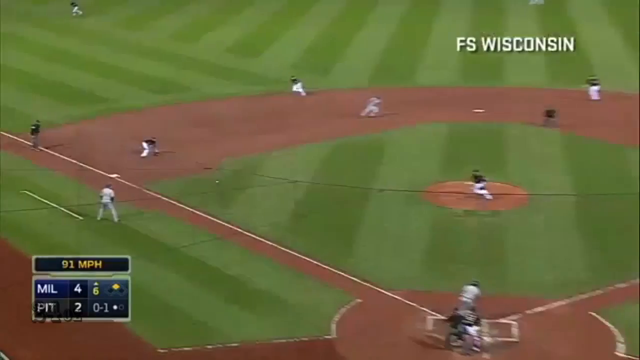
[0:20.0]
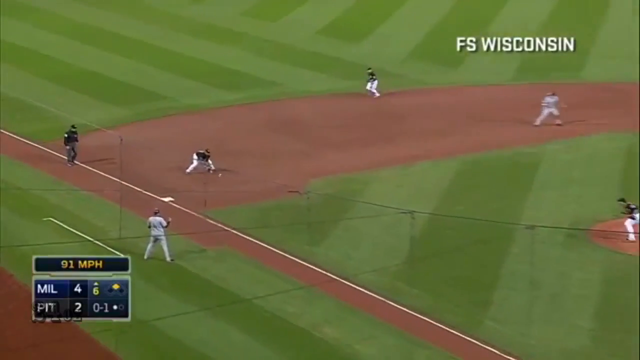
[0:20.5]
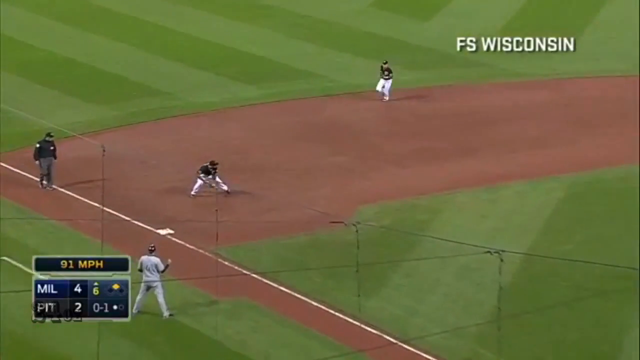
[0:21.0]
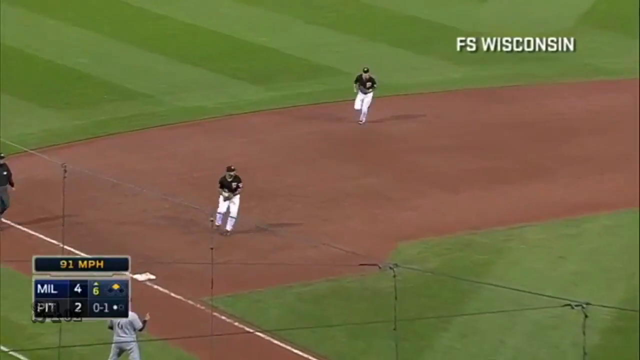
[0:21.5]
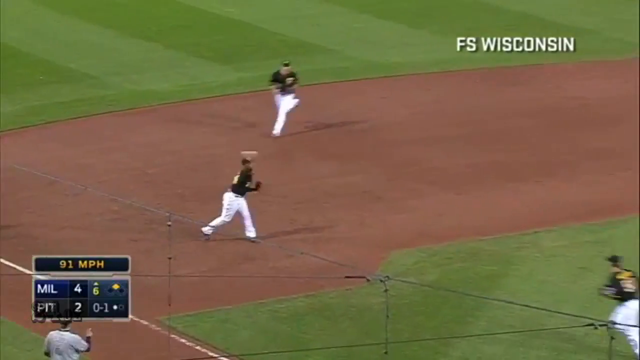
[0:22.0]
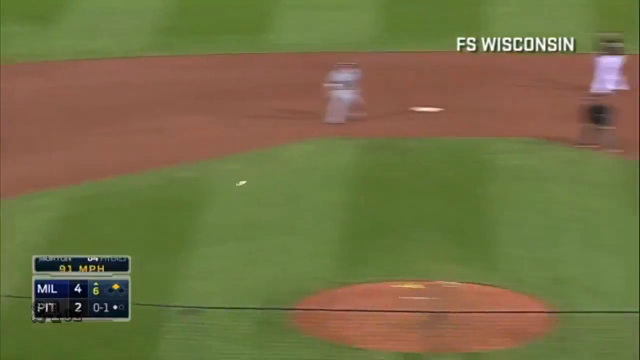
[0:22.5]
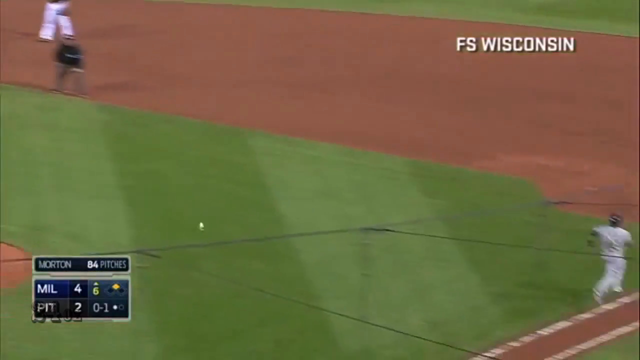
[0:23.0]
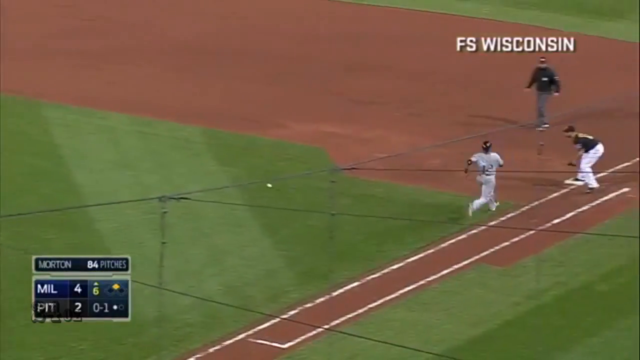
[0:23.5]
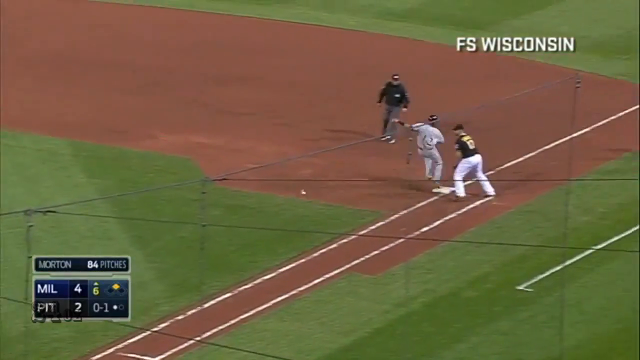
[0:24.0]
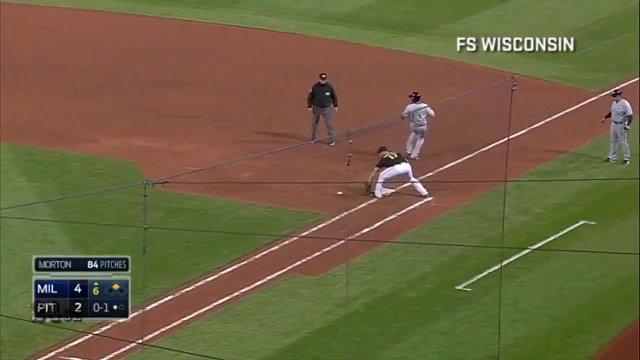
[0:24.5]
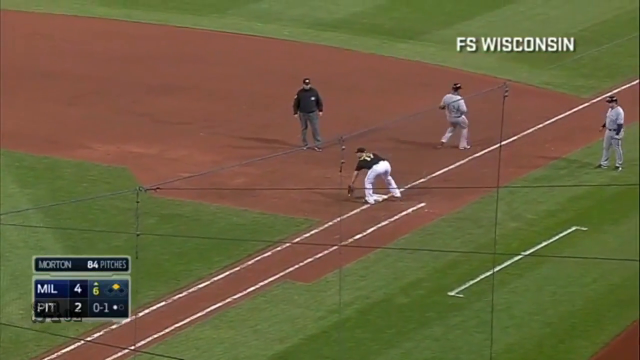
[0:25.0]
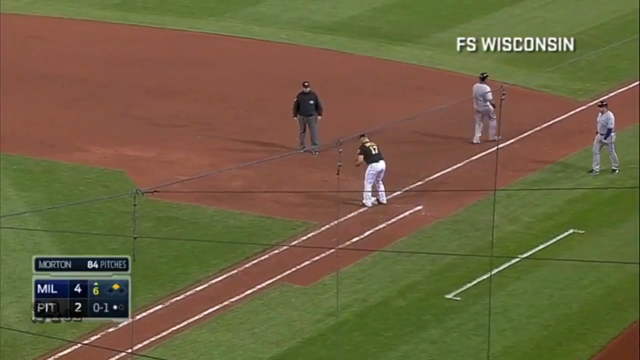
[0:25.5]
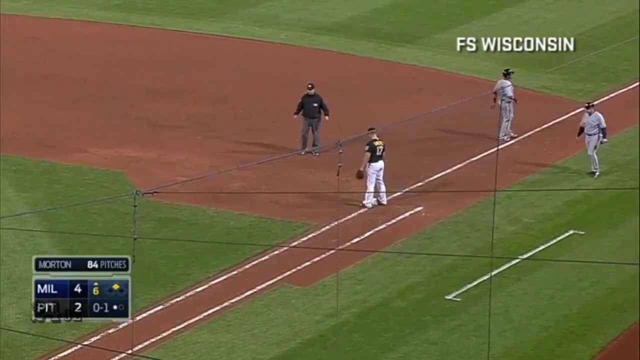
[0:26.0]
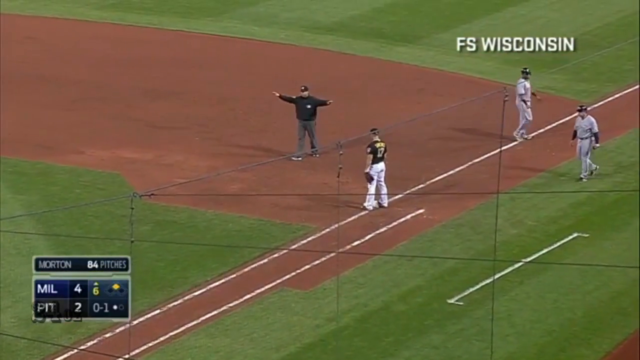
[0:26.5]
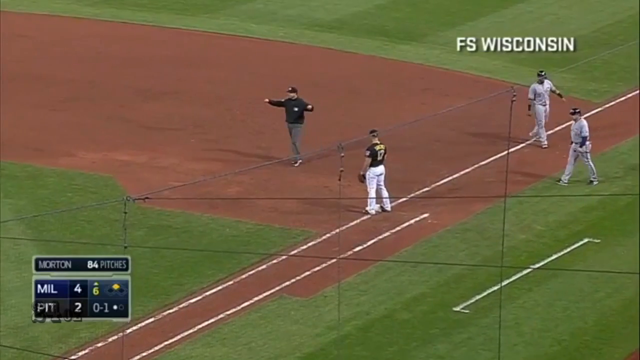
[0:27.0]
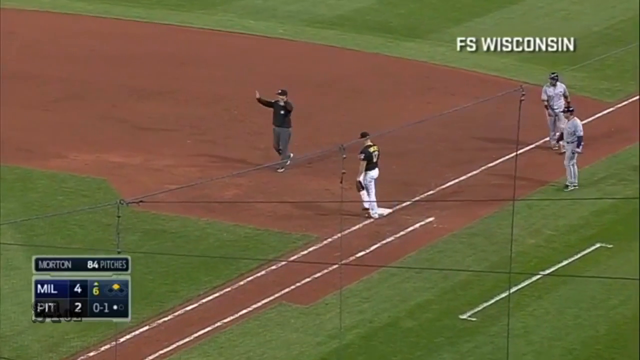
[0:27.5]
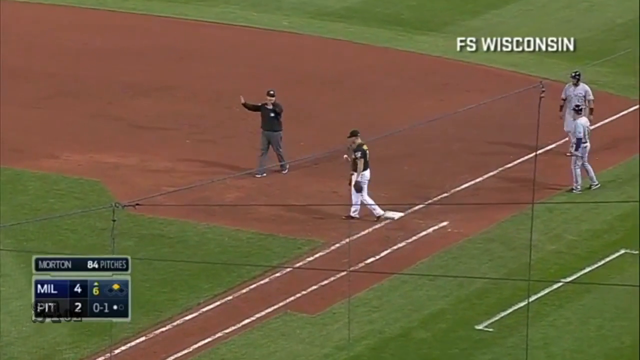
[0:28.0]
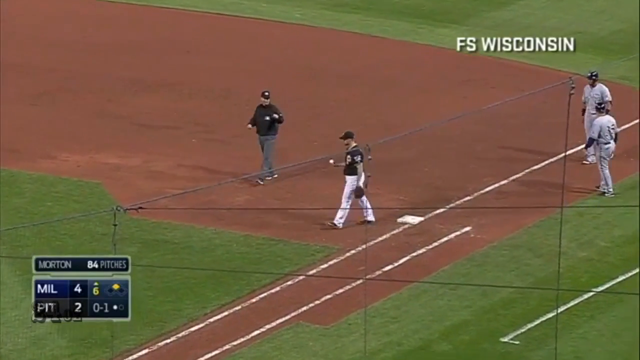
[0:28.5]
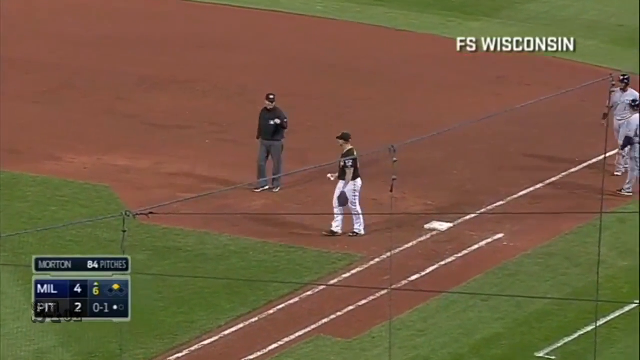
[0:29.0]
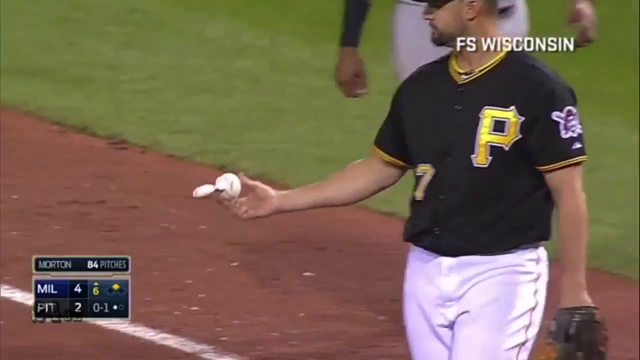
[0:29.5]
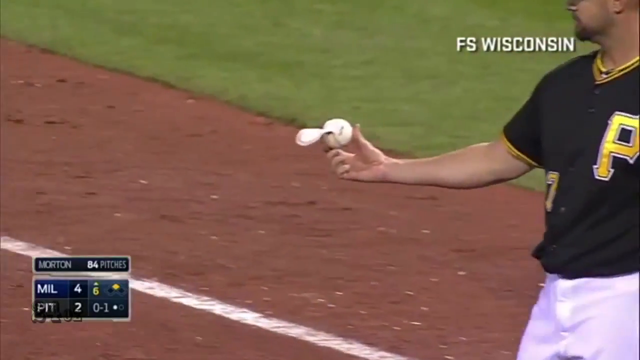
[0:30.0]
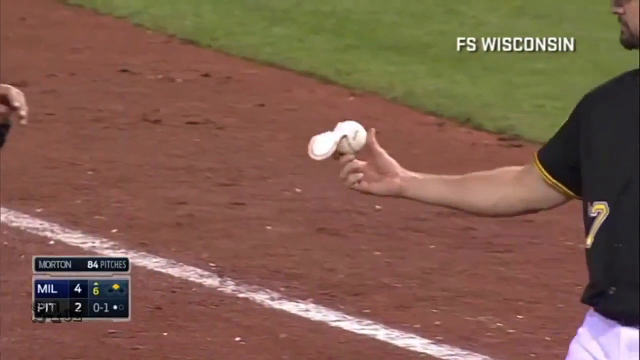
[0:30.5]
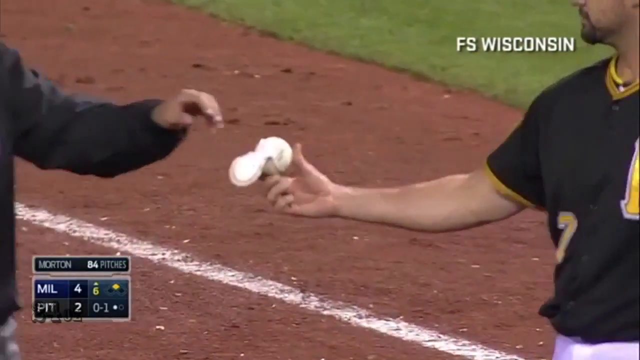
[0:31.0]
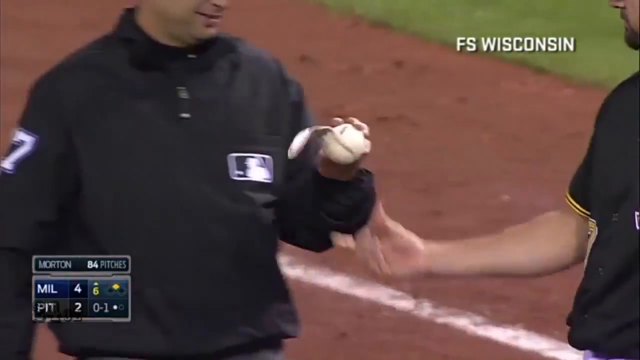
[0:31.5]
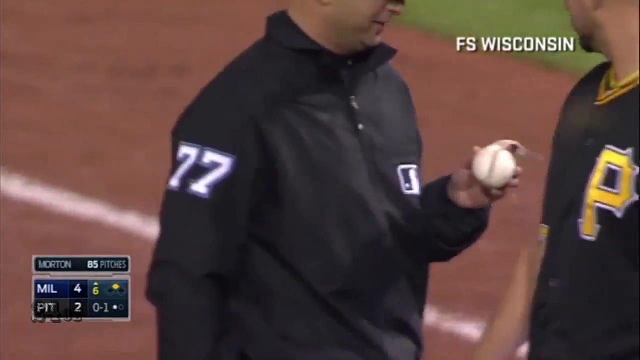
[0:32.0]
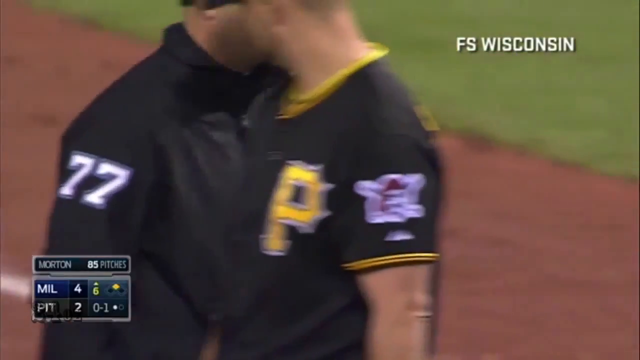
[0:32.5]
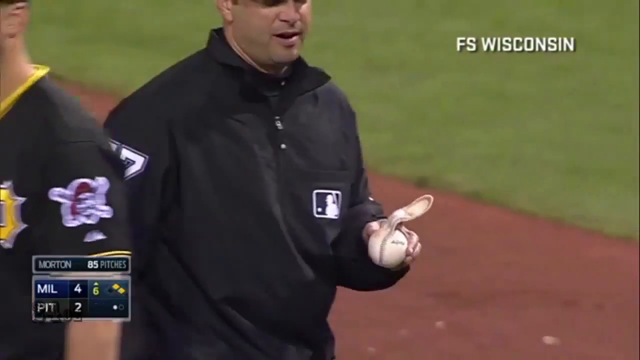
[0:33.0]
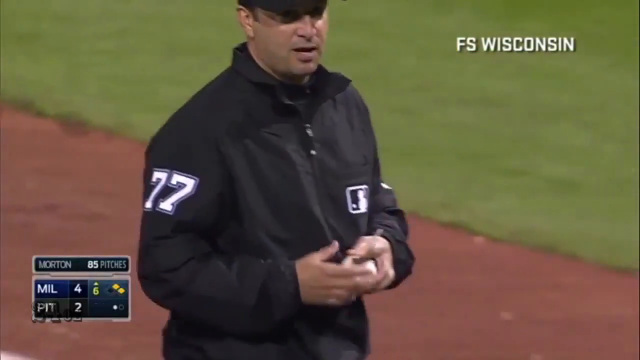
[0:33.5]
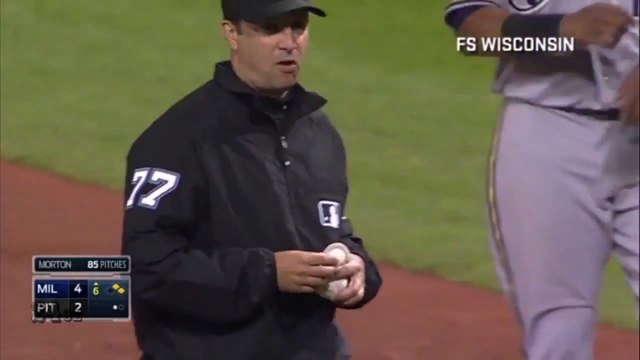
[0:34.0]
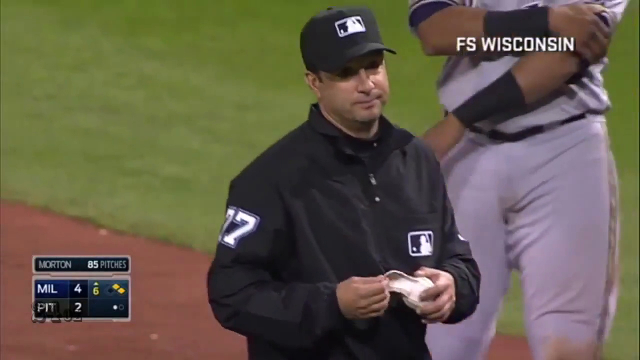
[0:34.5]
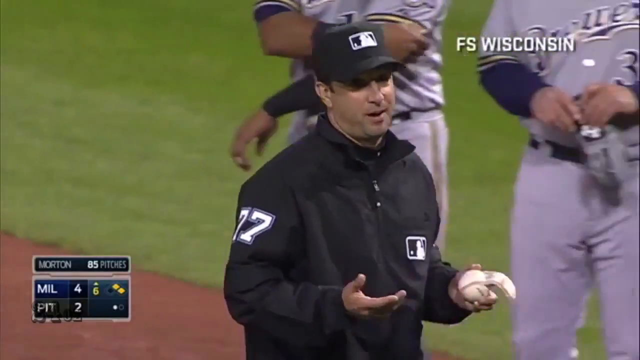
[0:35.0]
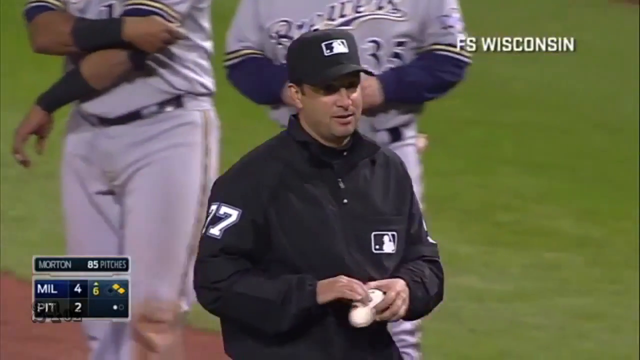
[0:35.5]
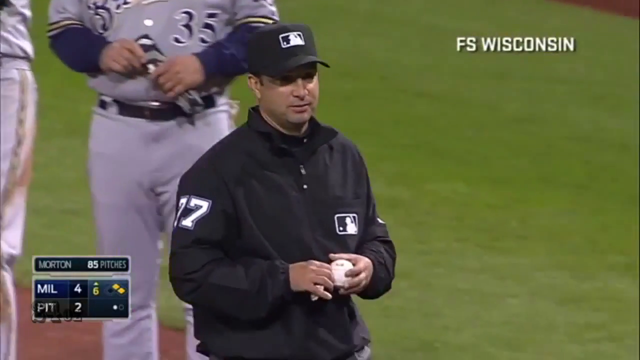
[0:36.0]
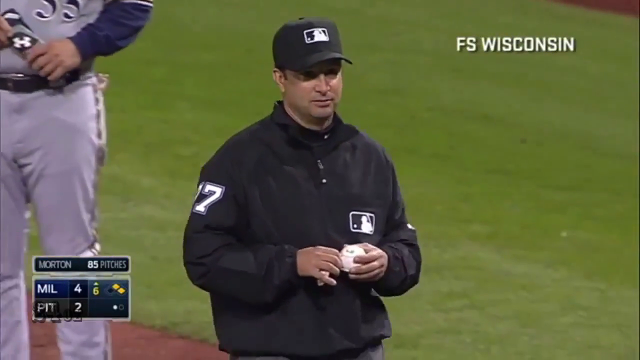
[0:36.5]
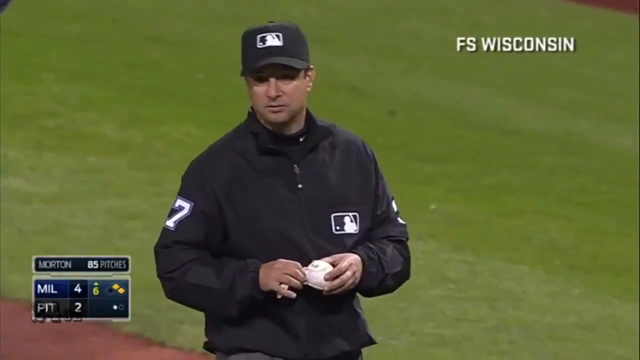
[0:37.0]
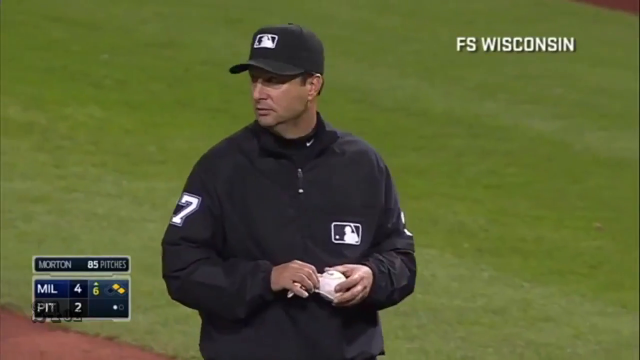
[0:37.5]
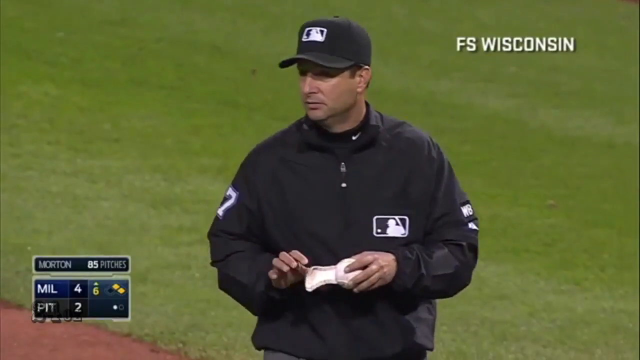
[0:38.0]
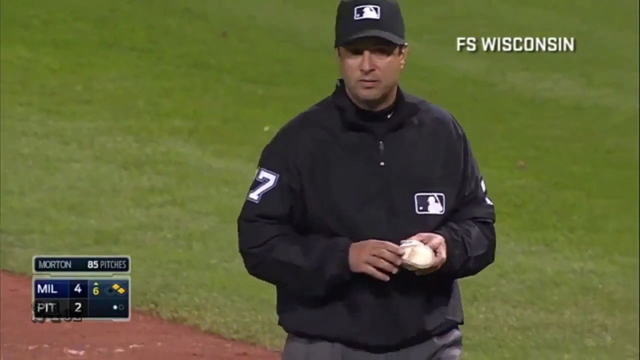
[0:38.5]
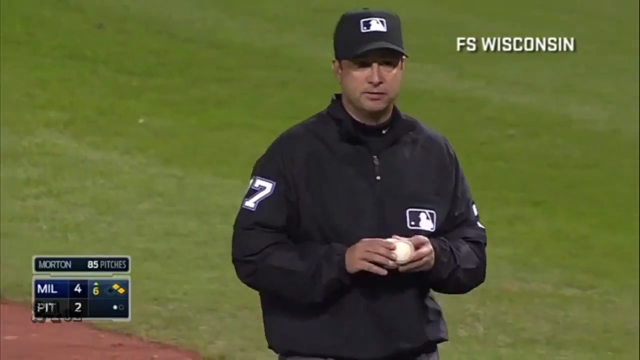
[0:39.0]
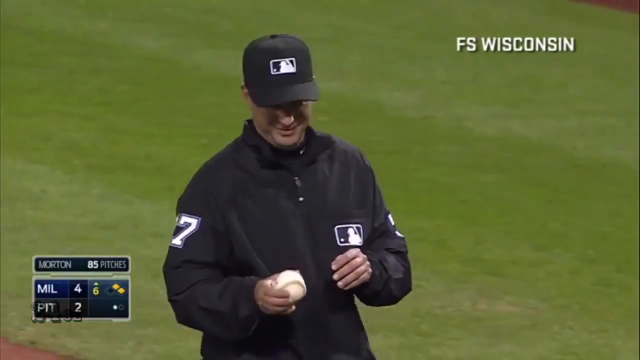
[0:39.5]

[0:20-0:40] A ball is thrown to third base, and the fielder tags the base, getting the runner out. When he throws the ball to first base, the top of the baseball has ripped off. The umpire carries the baseball to look at it and shakes his head. The umpires are dressed in black jackets and red pants. Players with the letter P on their uniforms look as if they are from Pittsburgh. Seven players can be seen. After the ball rips, the players stand behind the umpire with their arms crossed. The grass is green and cut with neatly mowed lines, and there is also brown dirt and white lines marking out the field.